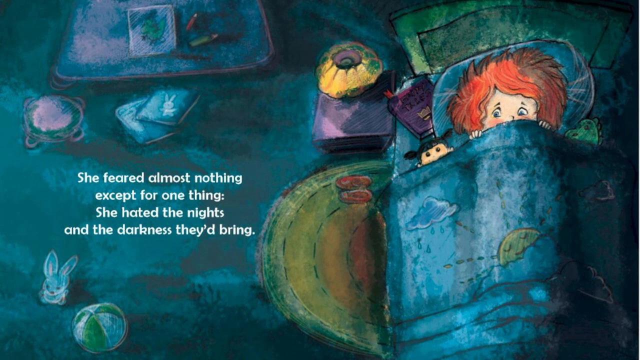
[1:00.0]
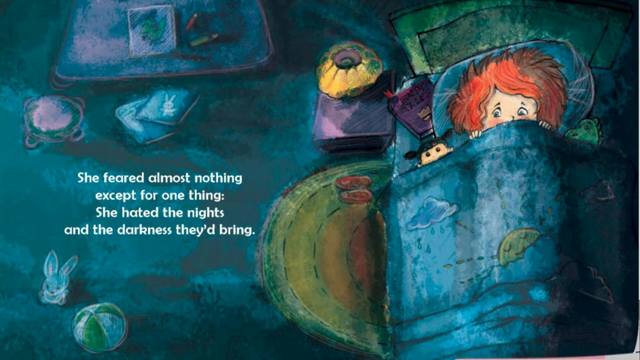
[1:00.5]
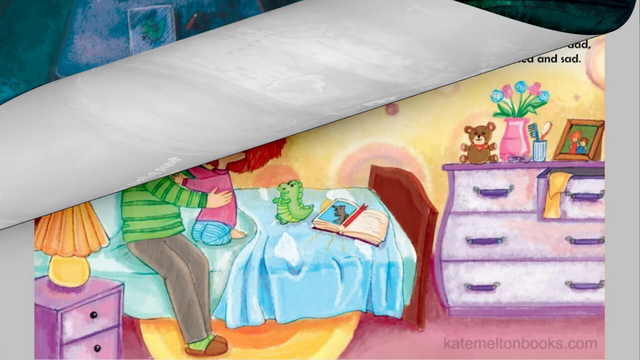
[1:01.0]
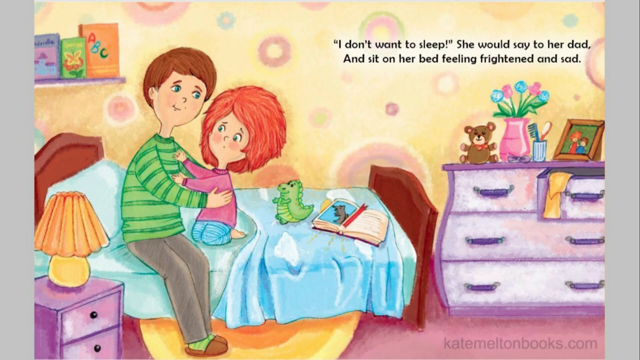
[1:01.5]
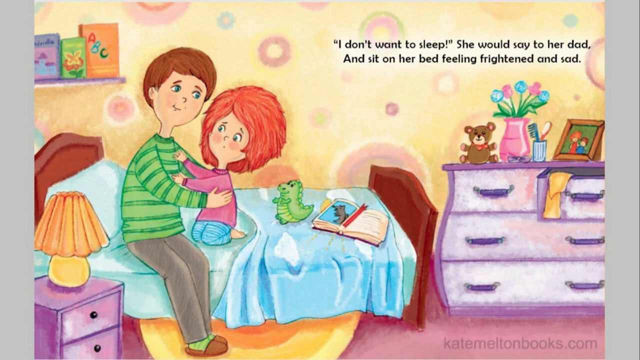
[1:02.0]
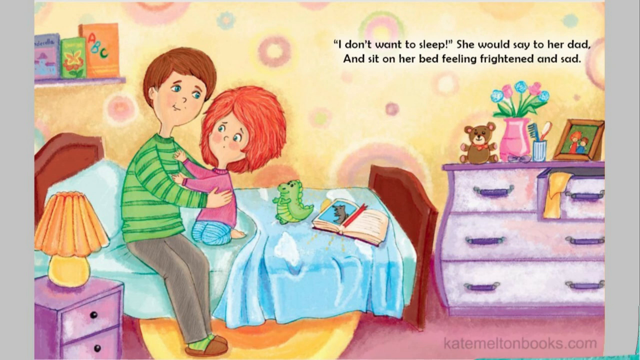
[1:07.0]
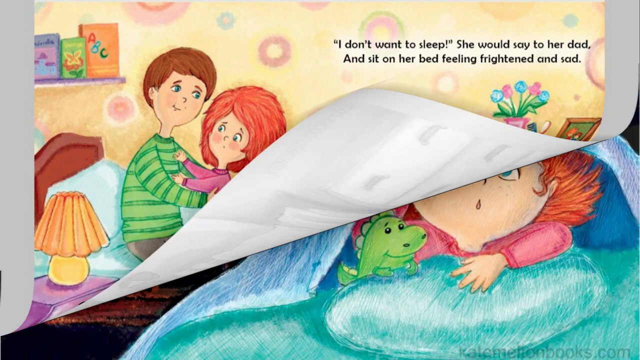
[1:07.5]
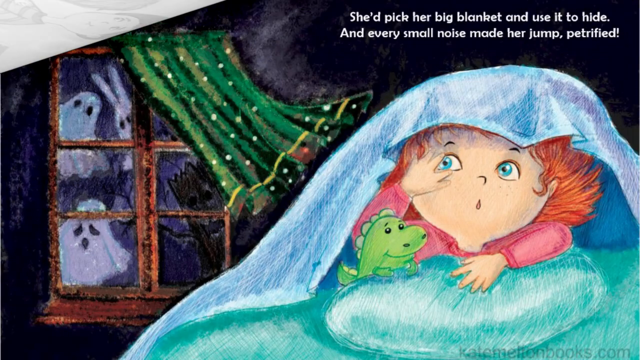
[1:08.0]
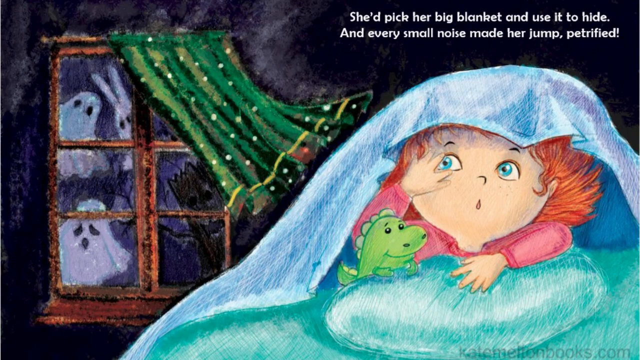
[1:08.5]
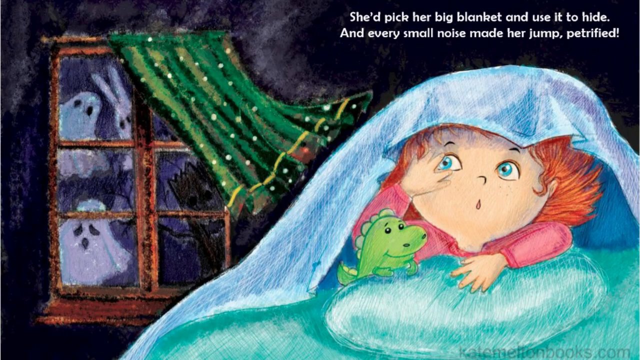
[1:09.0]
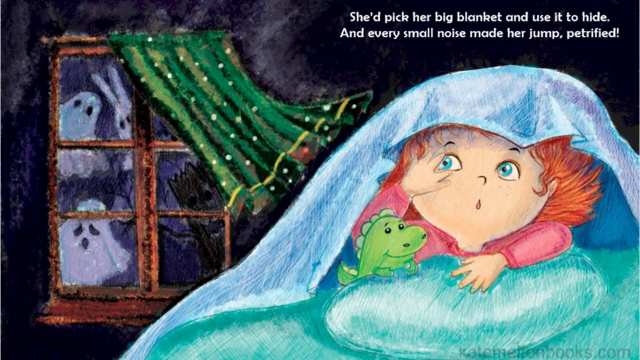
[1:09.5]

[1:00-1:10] An illustration from the book shows a night-time scene. The girl with orange hair lies in her bed below bedsheets that have a sun and clouds on them, with a pillow below her head. A book is to the left of the pillow, and a little toy is hiding below the sheets as well. Text on the left side reads "She feared almost nothing except for one thing. She hated the nights and the darkness they'd bring." The rest of her room is visible: a carpet below the bed, a little bunny on the left side, and a lamp with a little thing holding it up next to the bed.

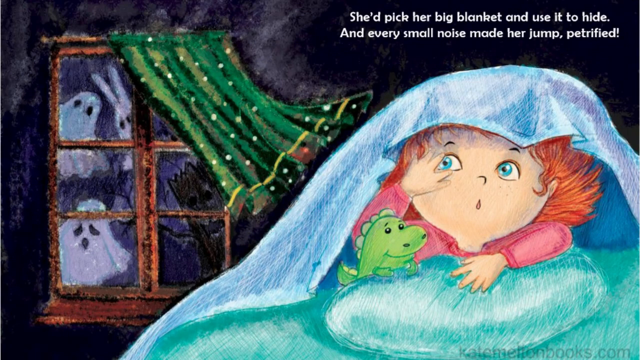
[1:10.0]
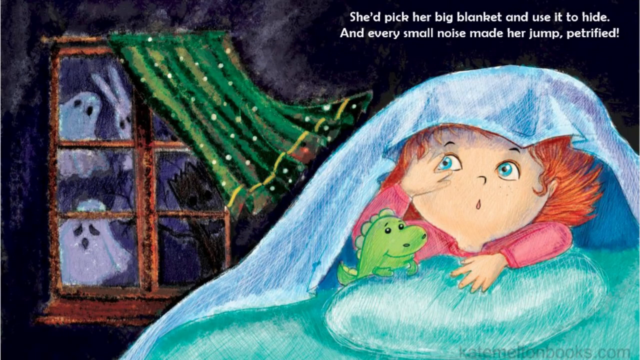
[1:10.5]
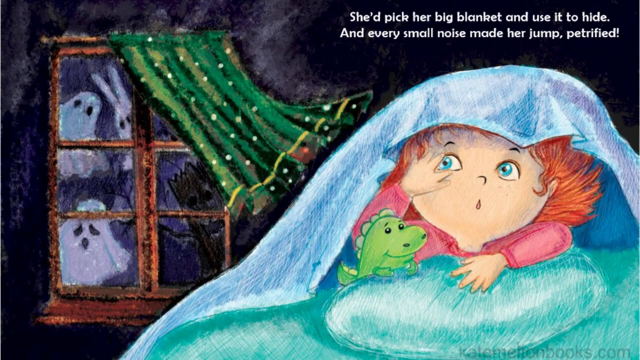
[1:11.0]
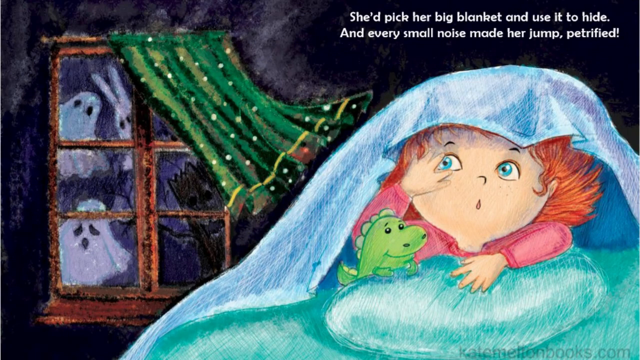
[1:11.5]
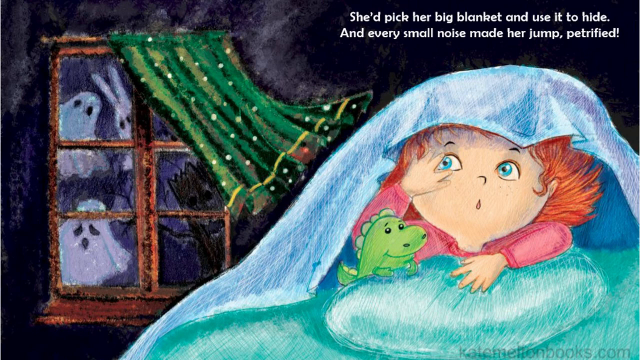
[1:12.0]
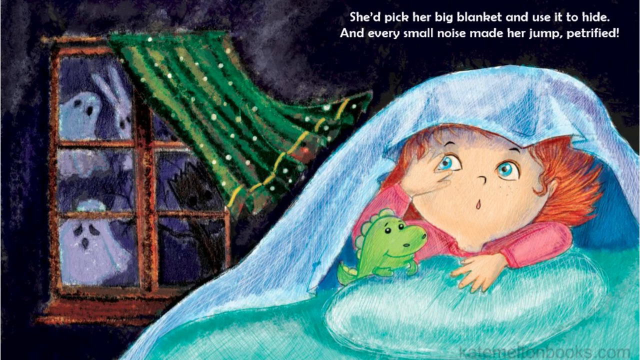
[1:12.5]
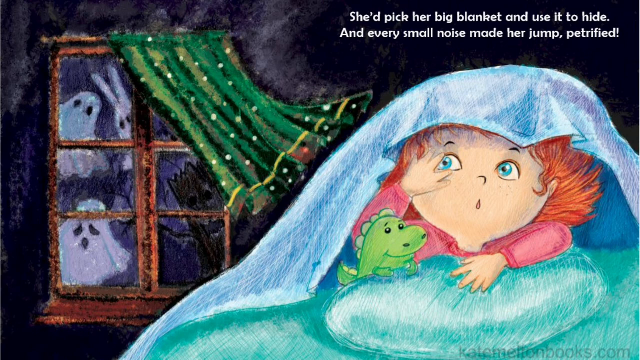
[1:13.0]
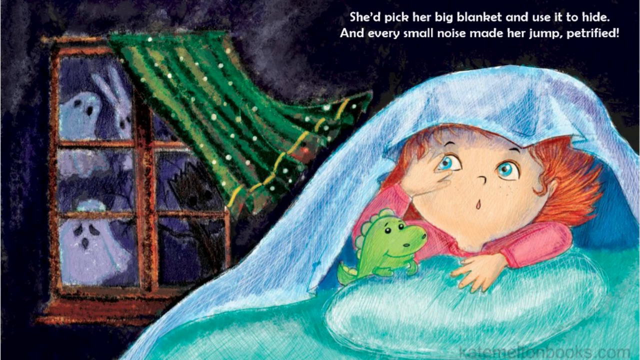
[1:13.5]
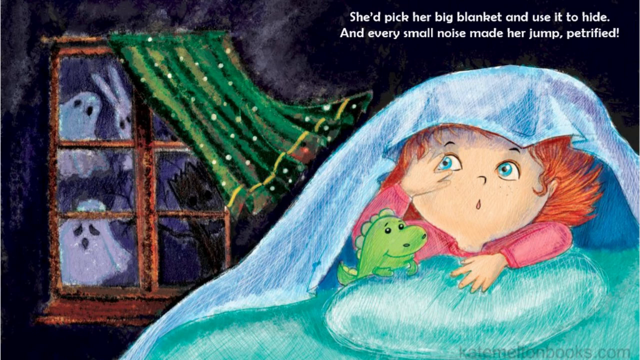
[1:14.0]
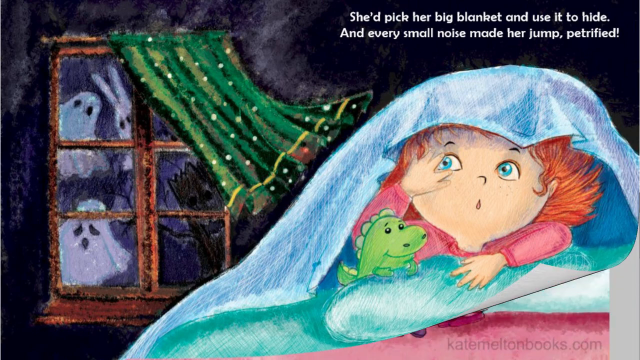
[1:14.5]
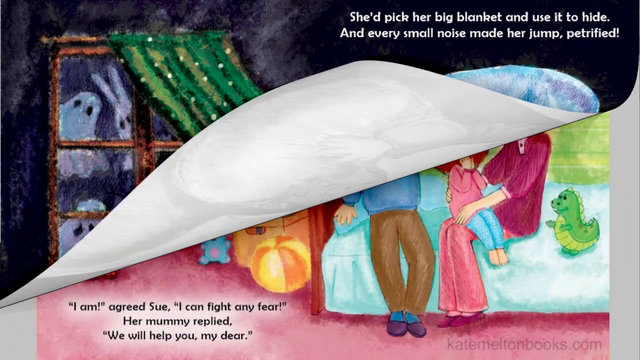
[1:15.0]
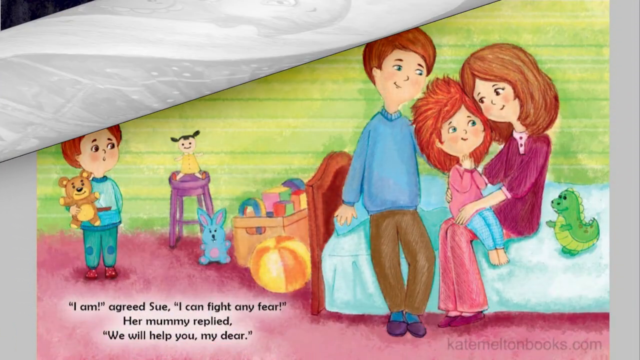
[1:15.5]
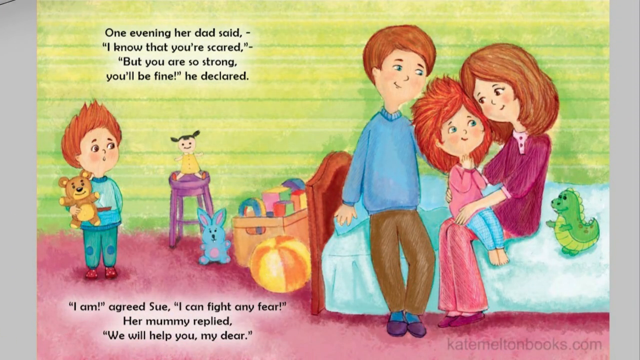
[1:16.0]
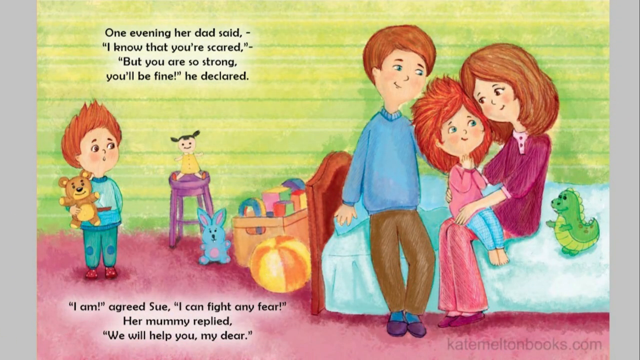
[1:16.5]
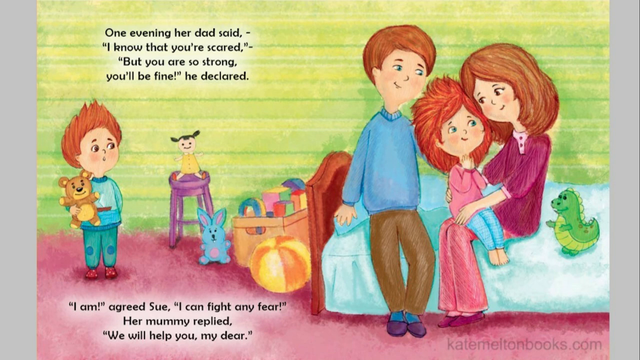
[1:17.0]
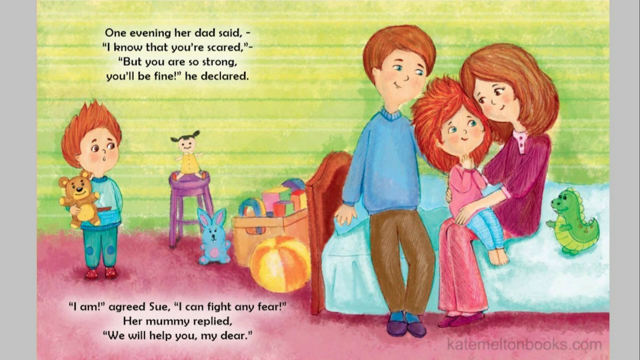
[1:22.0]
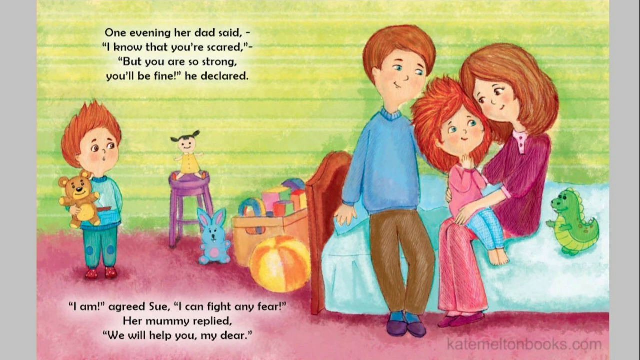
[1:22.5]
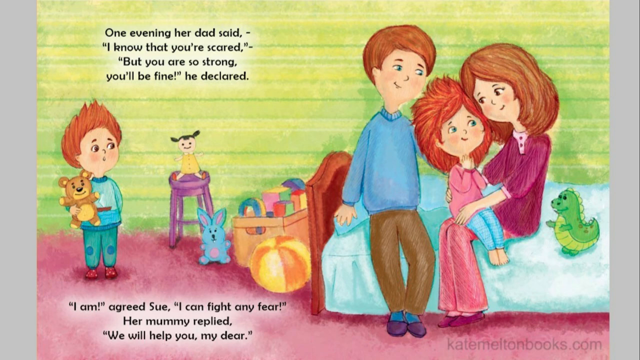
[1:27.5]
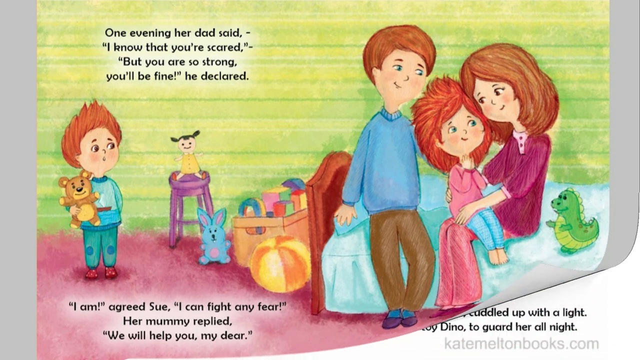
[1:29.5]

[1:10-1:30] An illustration shows the girl with orange hair, wearing pink pajamas, hiding below the bedsheets and folding them up so her face is visible; she looks confused. Next to her is a green dinosaur that looks to be a stuffed animal, and she holds a pillow below her. Behind her is a window with green curtains being blown away, and outside the window are white ghosts. The wall in the background is completely black, and the bedsheet looks to be black and white. Text in the top right of this page mentions her using a big blanket to hide and ends "every small noise made her jump petrified." The page then turns, and the next page reads "One evening her dad said, I know that you're scared but you were so strong and you'll be fine he declared."